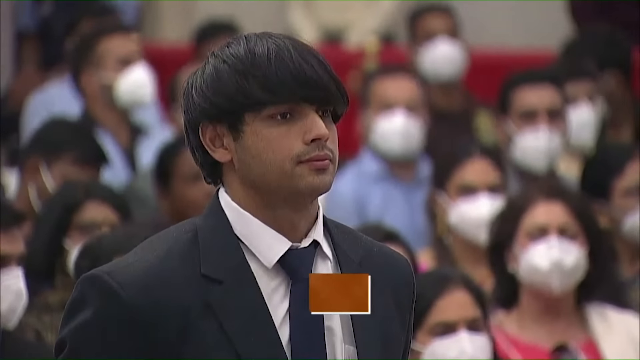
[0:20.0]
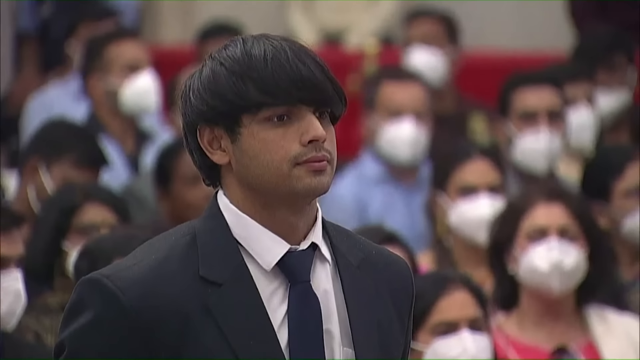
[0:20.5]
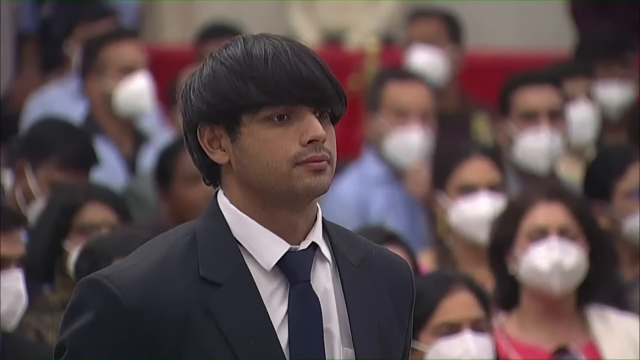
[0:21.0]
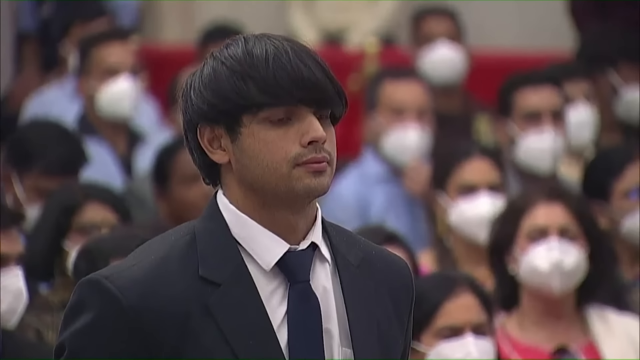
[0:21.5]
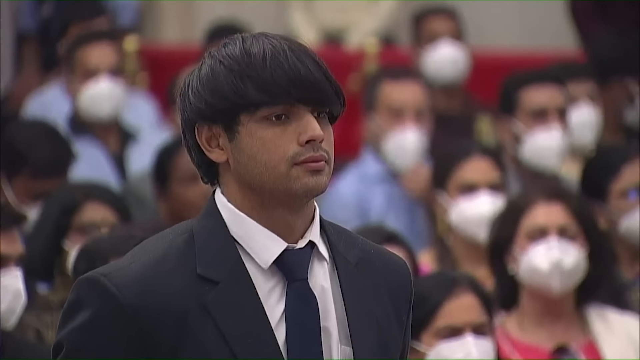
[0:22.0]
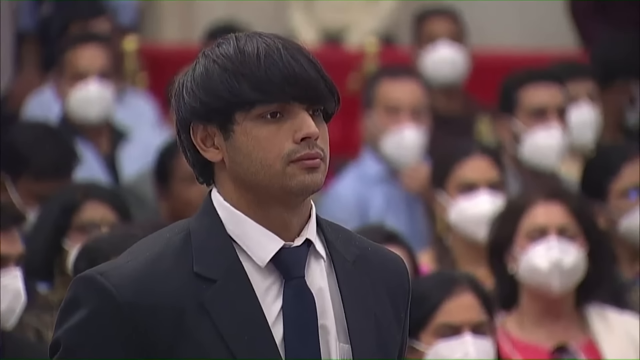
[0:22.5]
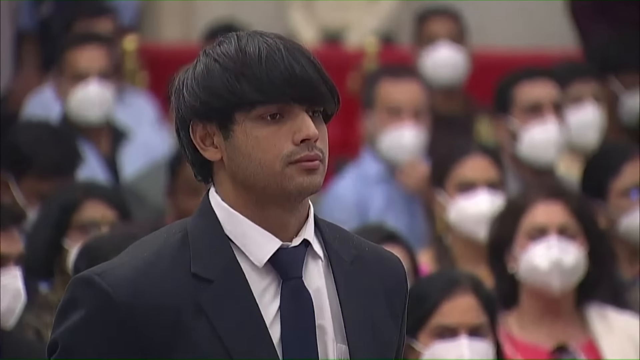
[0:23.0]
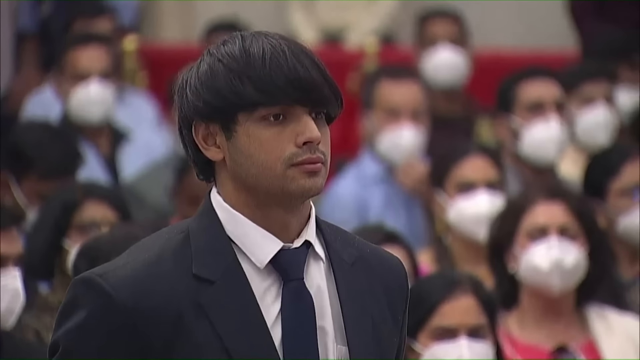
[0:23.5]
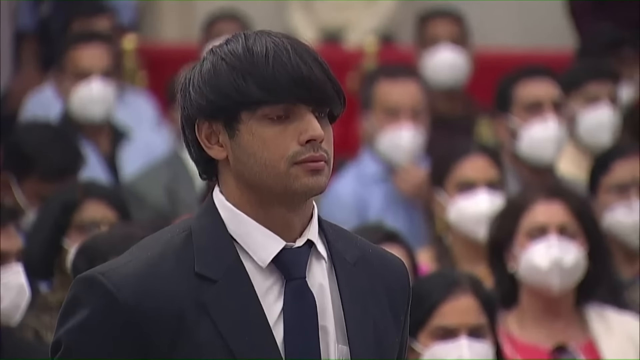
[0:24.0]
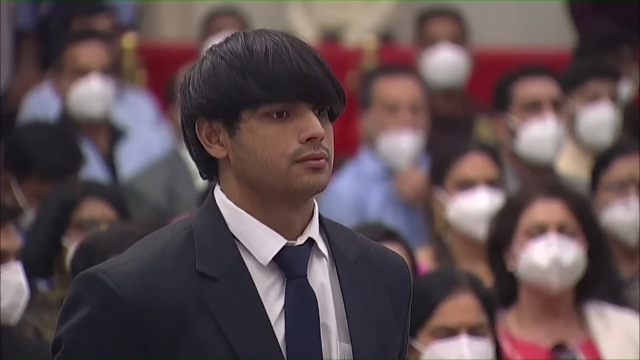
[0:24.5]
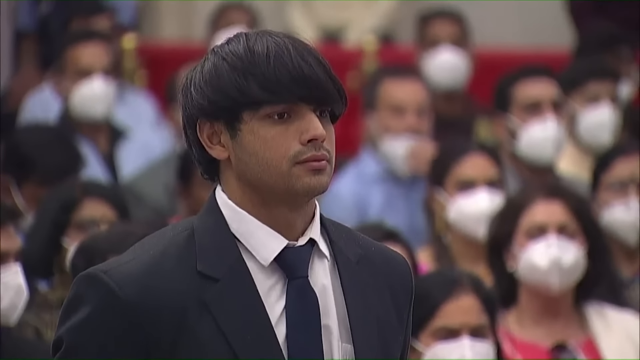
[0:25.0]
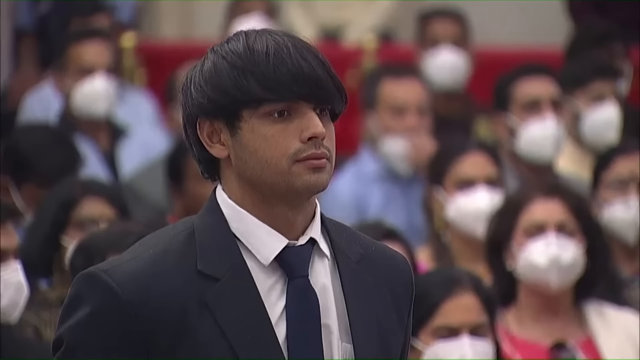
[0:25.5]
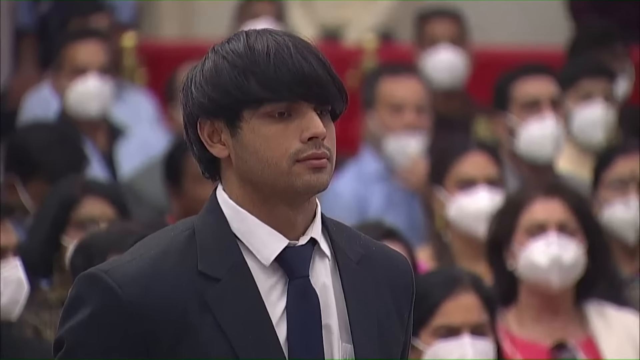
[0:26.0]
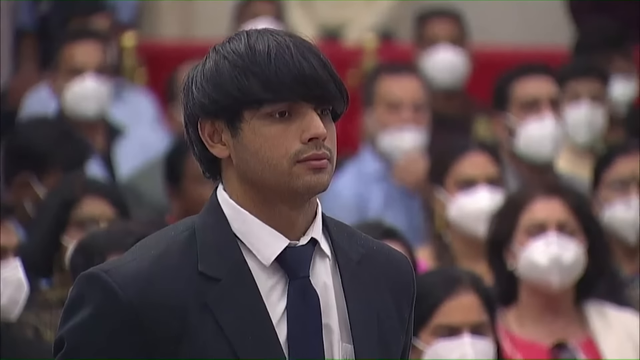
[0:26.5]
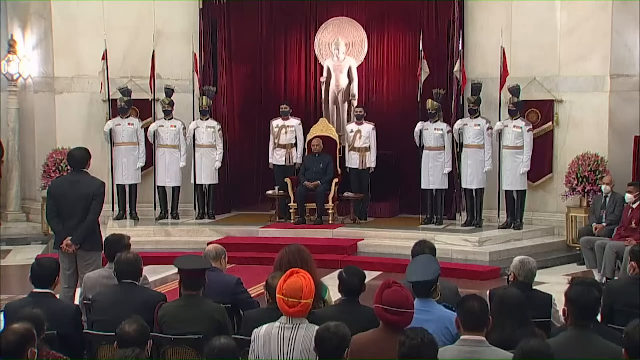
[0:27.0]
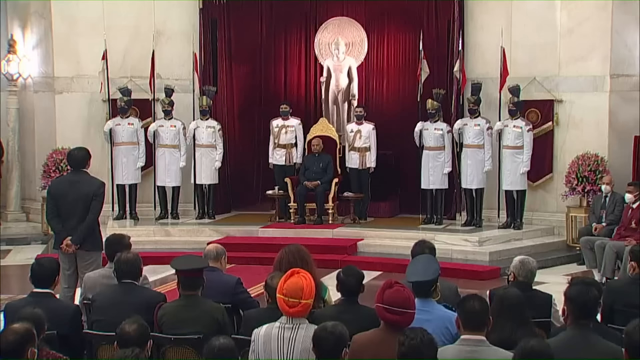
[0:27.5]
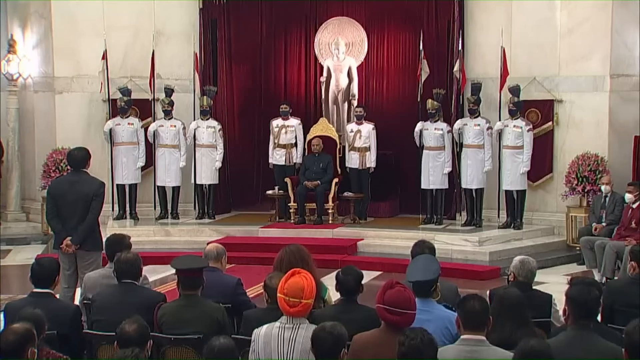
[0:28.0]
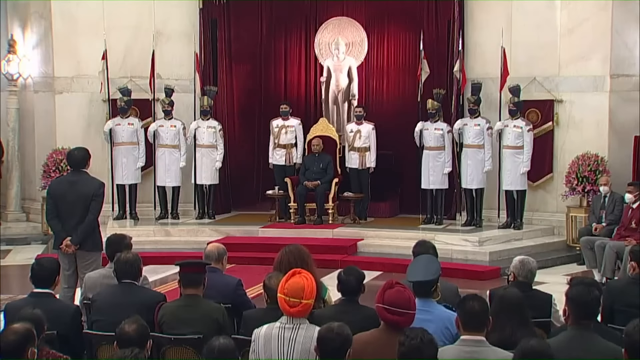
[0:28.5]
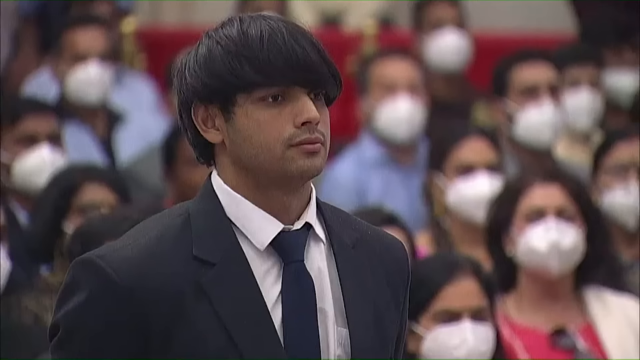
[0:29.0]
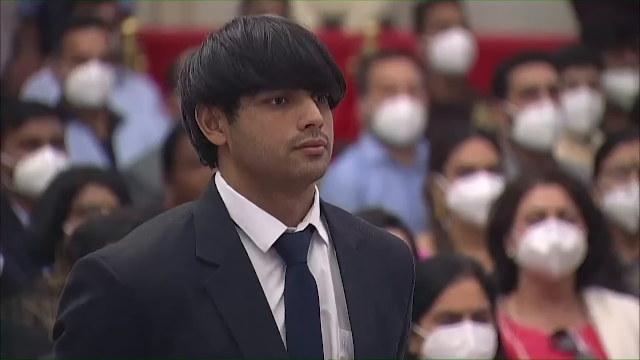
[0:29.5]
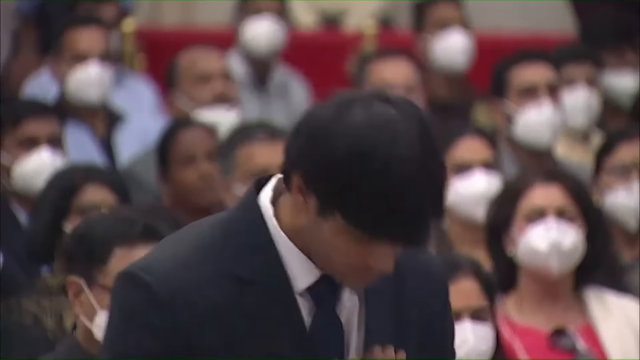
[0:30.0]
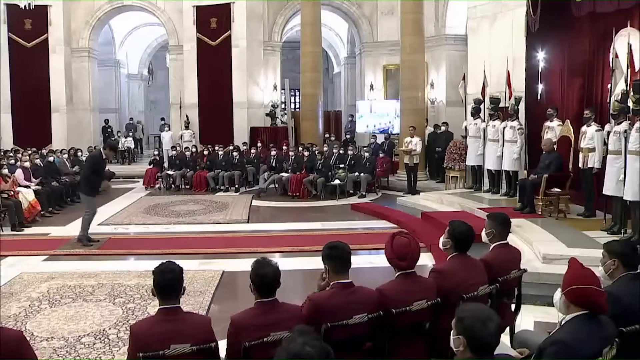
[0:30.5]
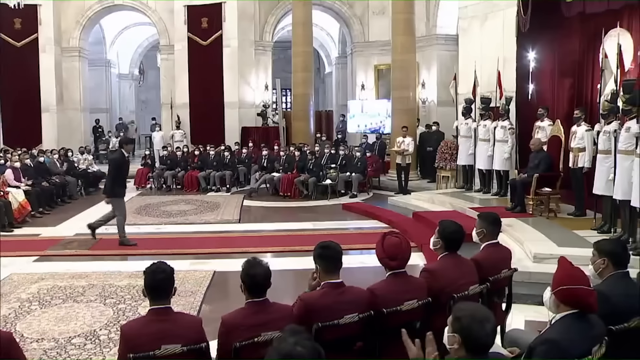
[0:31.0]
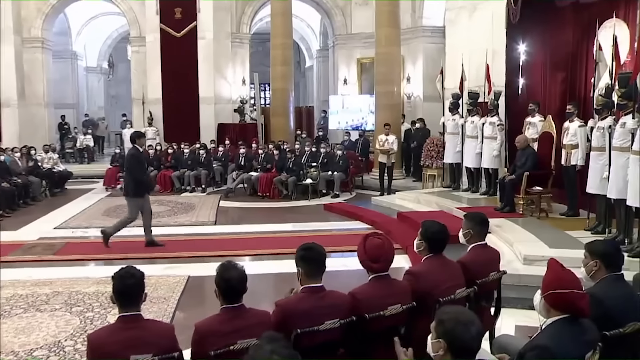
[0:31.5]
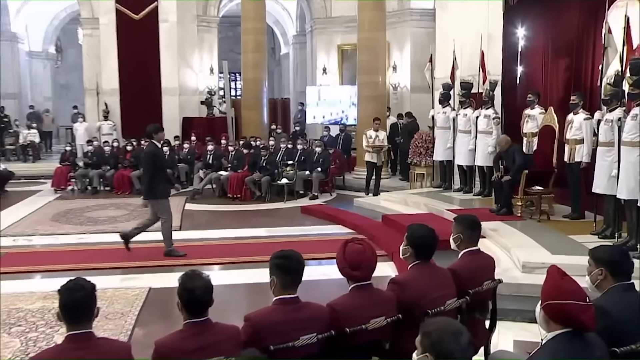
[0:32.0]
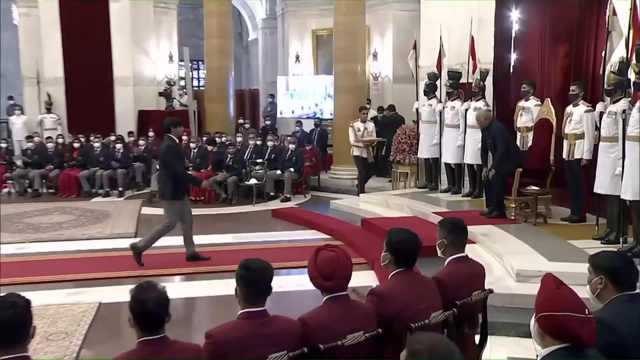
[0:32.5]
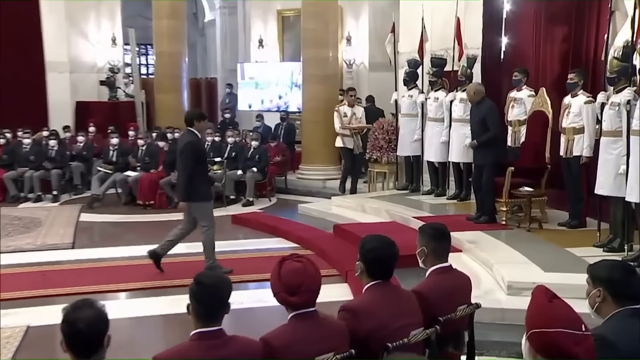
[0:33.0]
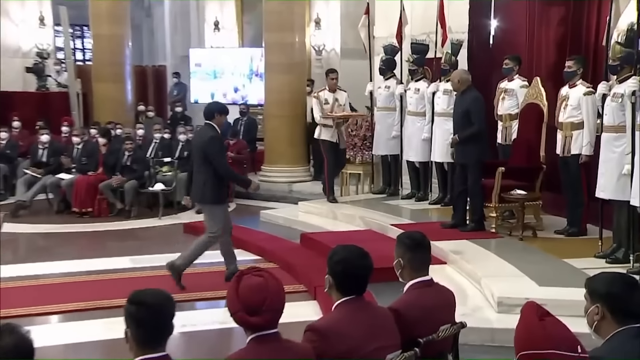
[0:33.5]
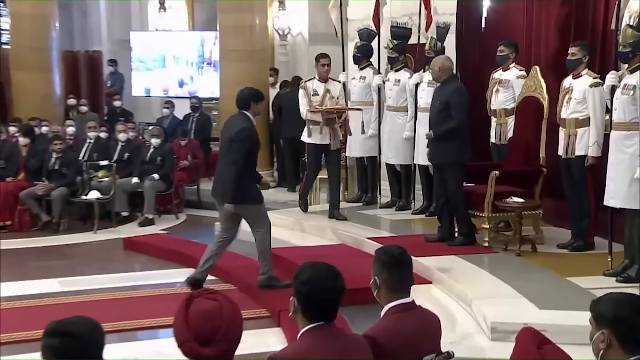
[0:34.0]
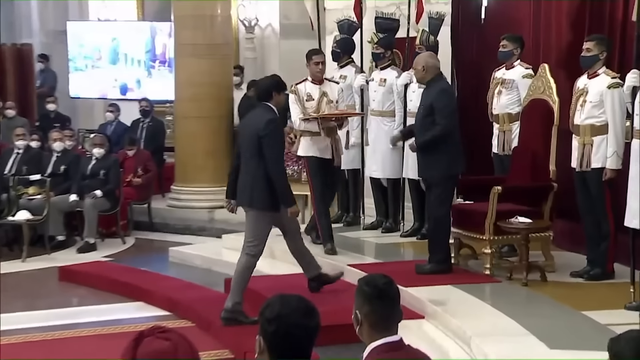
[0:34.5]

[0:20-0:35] Neeraj Chopra faces forward while some cameras go off. The view moves to a wider shot of President Kovind sitting in the throne on top of a marble stage framed in red carpet. On either side of the president are three guards wearing white and carrying tall flags or spears. Two gentlemen in white stand one on either side of the throne. Behind the throne is a very large white statue, apparently of a religious figure such as a god, and behind that is a deep red velvet curtain. Two banners, one on each side, are red velvet with gold edging, with some kind of logo or emblem in gold on top of them. Very large gold planters each hold a small tree with pink flowers.